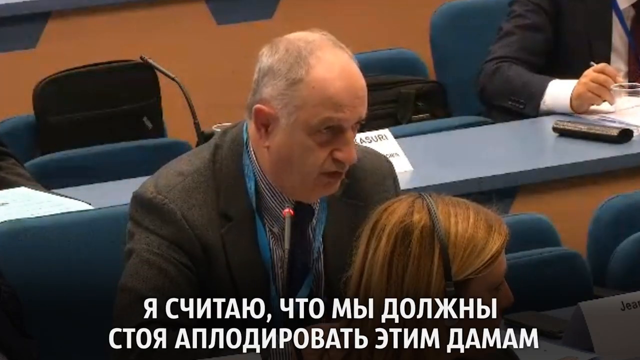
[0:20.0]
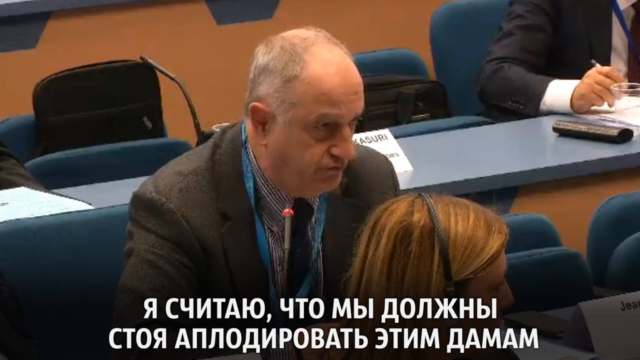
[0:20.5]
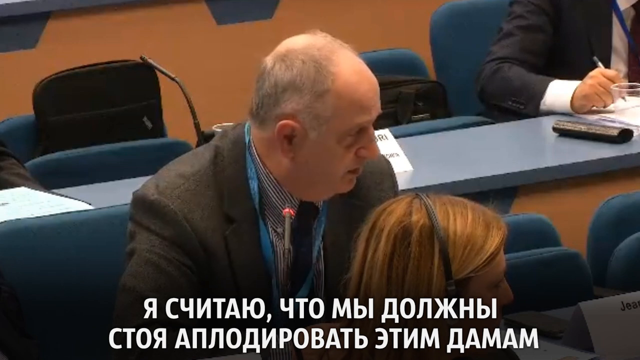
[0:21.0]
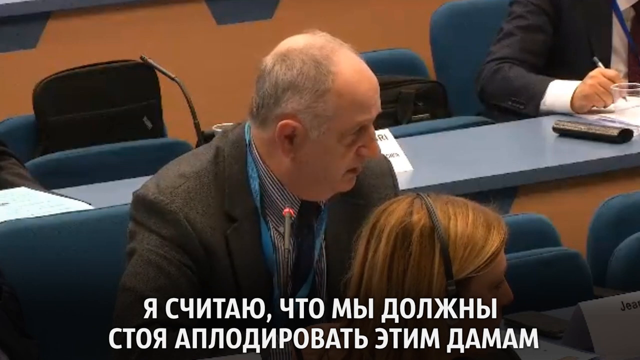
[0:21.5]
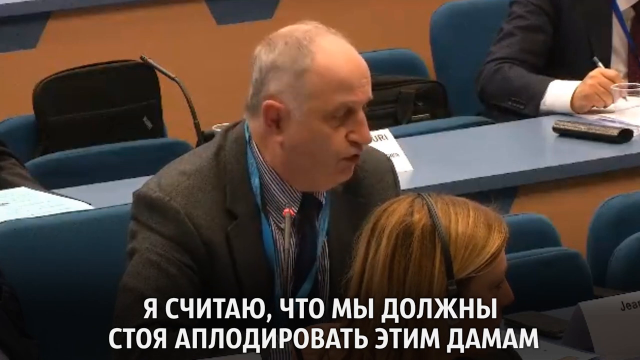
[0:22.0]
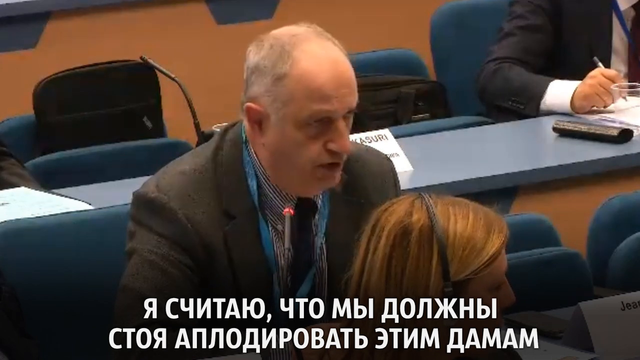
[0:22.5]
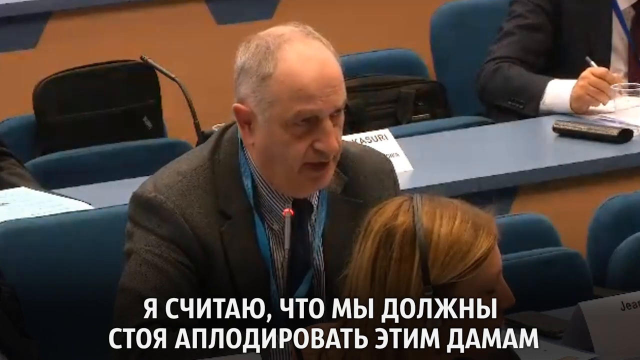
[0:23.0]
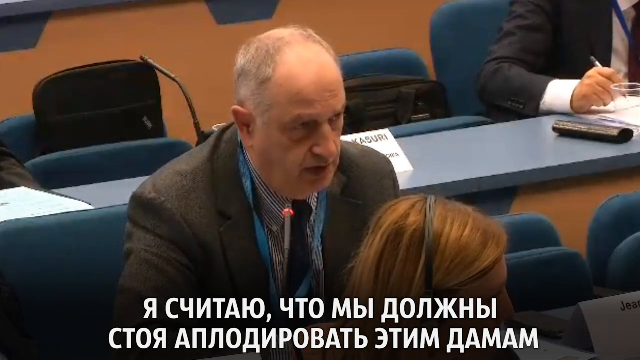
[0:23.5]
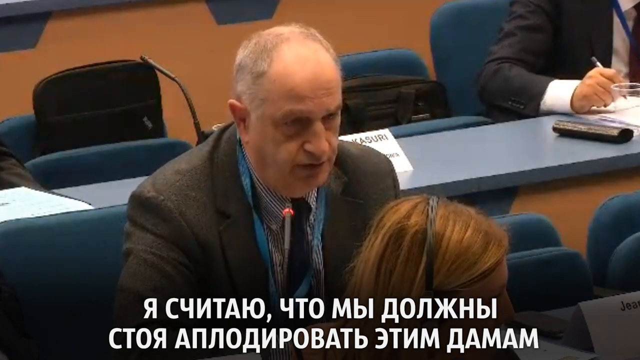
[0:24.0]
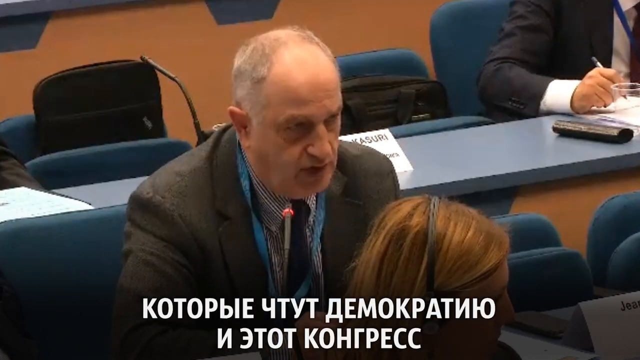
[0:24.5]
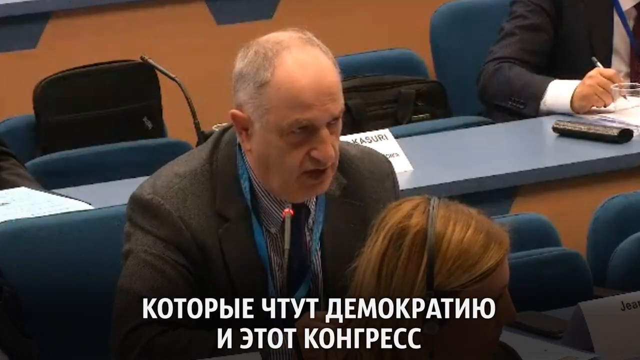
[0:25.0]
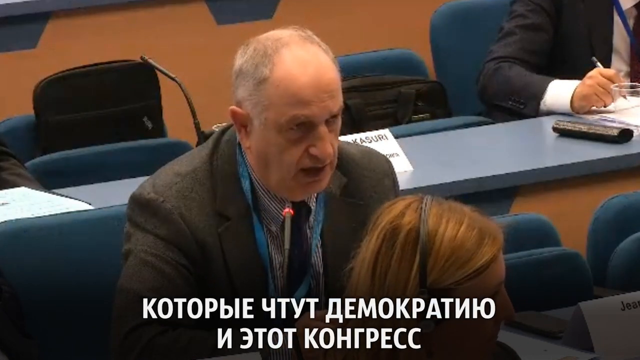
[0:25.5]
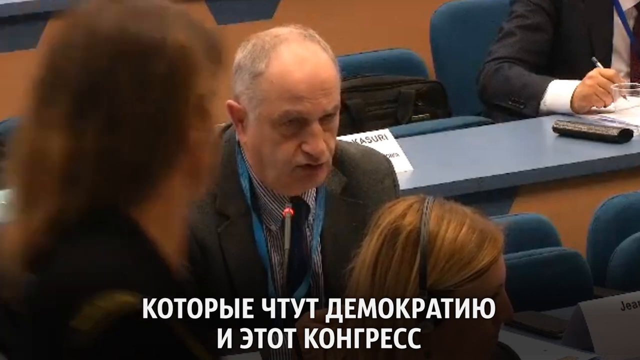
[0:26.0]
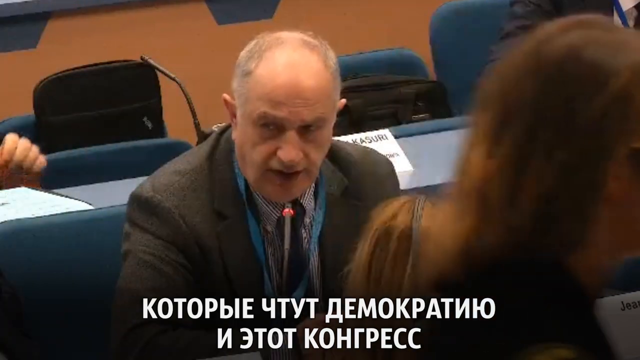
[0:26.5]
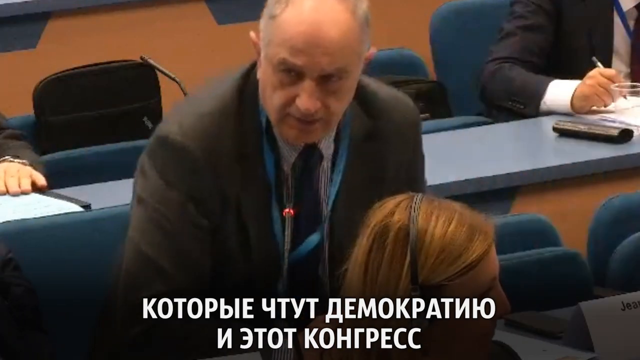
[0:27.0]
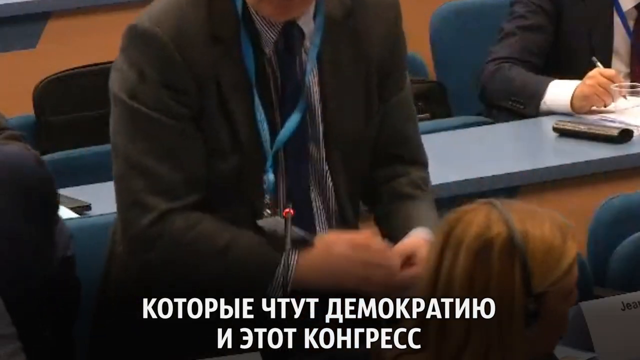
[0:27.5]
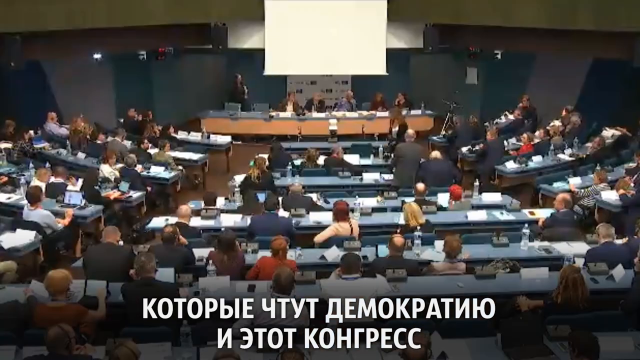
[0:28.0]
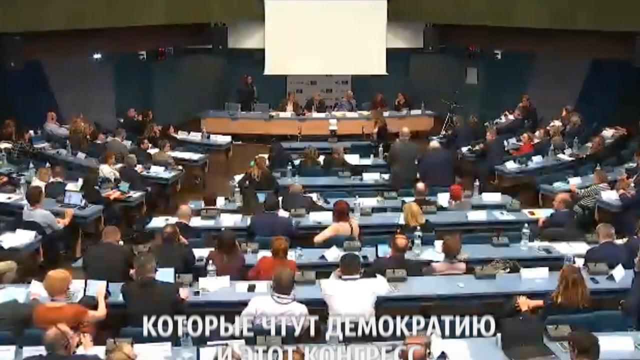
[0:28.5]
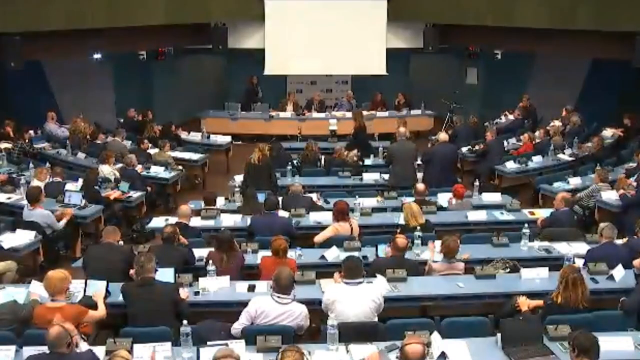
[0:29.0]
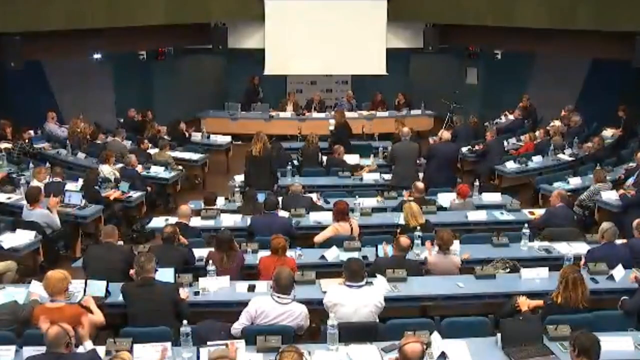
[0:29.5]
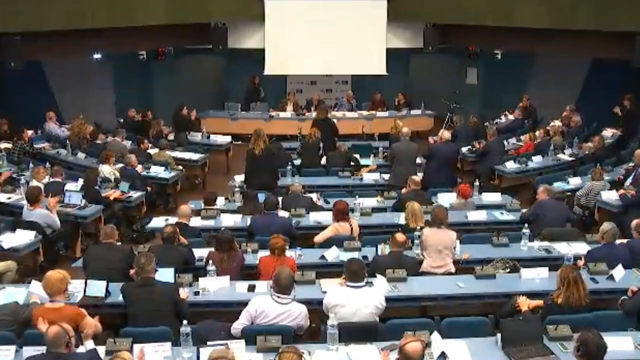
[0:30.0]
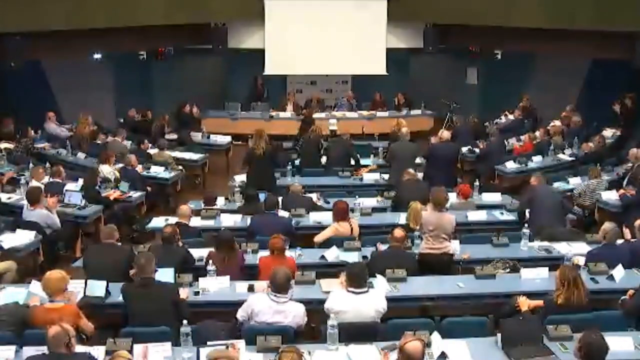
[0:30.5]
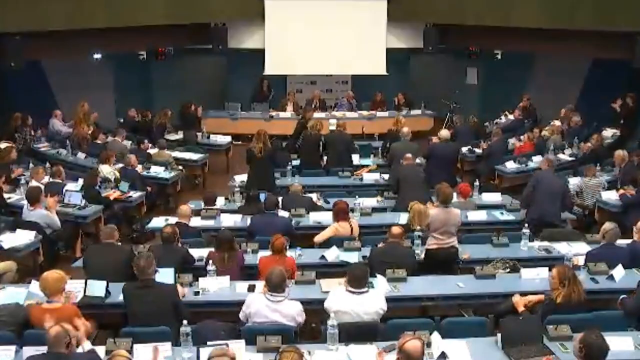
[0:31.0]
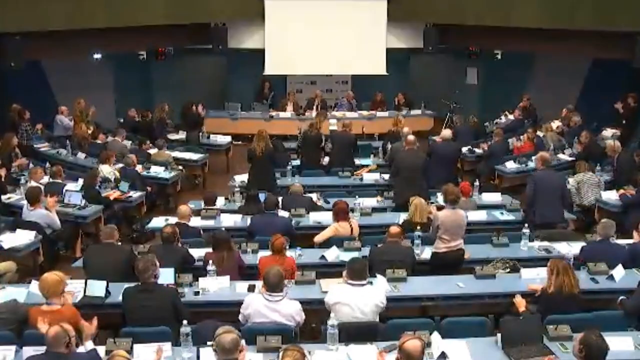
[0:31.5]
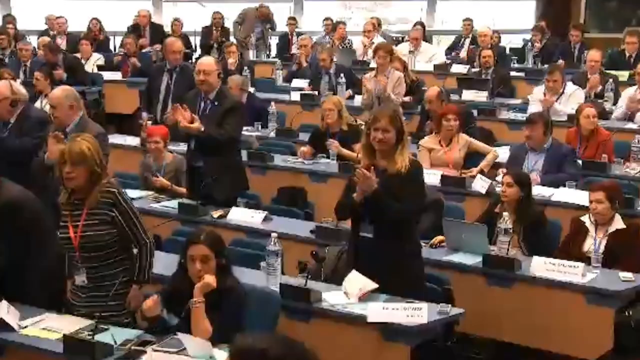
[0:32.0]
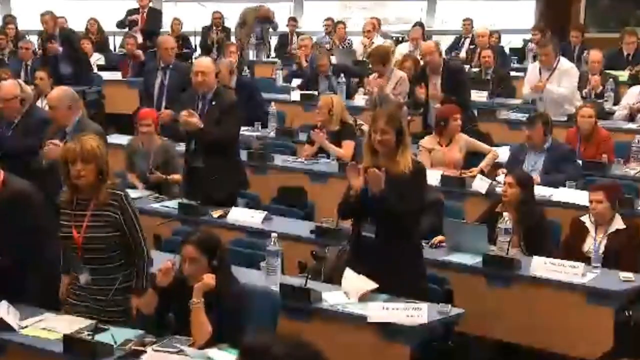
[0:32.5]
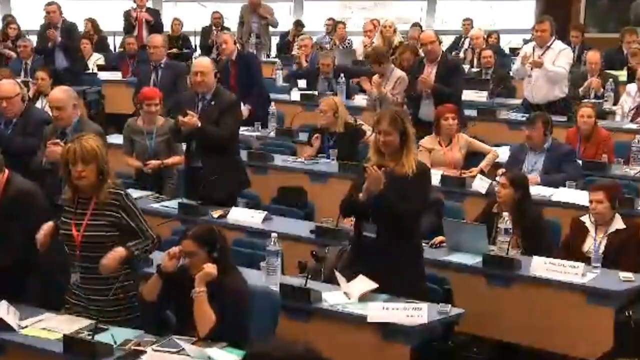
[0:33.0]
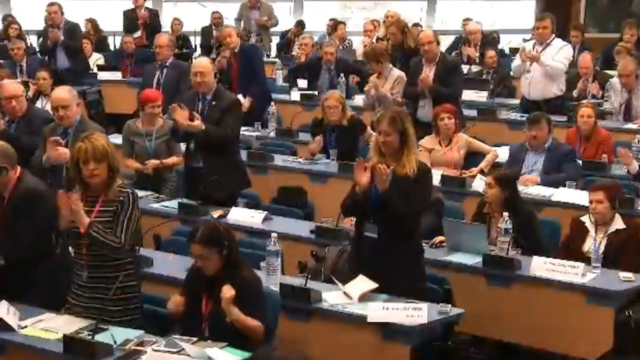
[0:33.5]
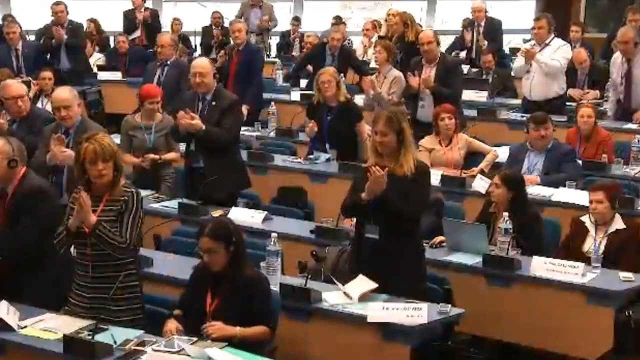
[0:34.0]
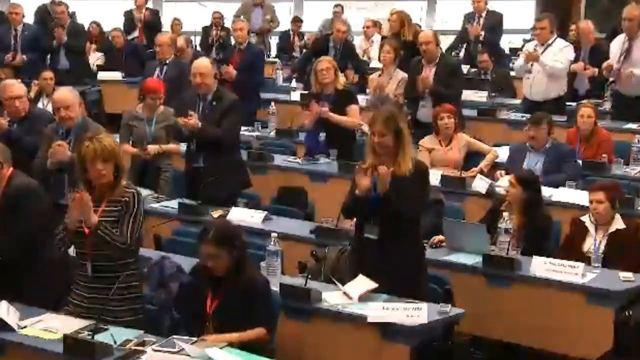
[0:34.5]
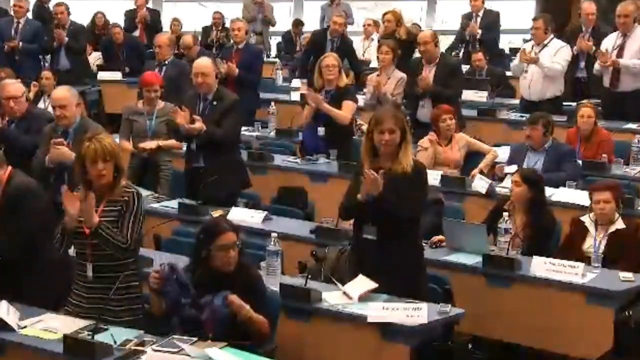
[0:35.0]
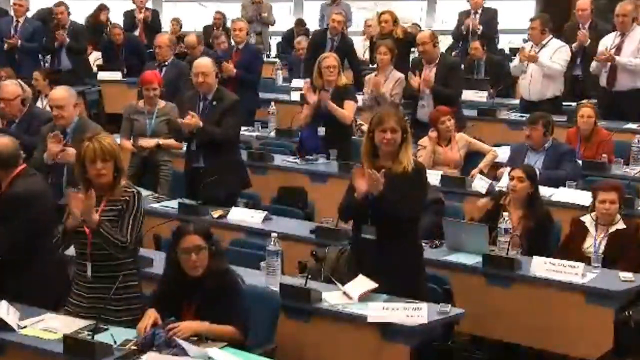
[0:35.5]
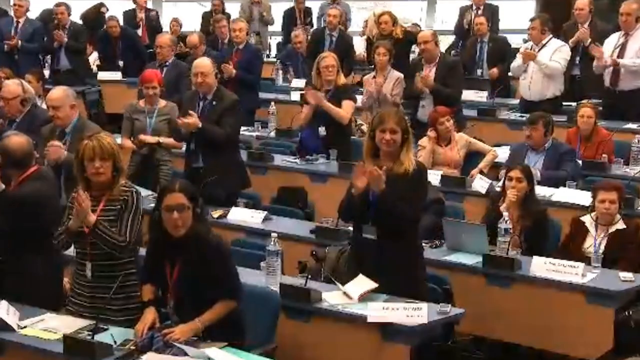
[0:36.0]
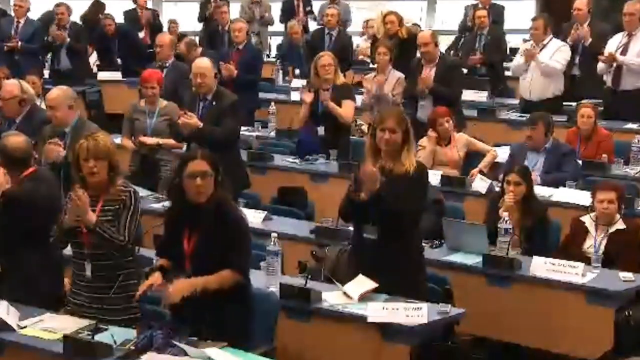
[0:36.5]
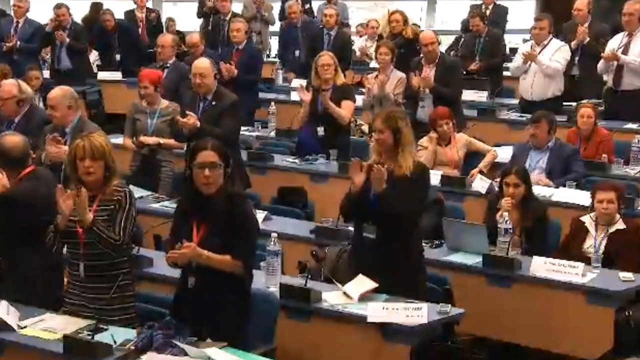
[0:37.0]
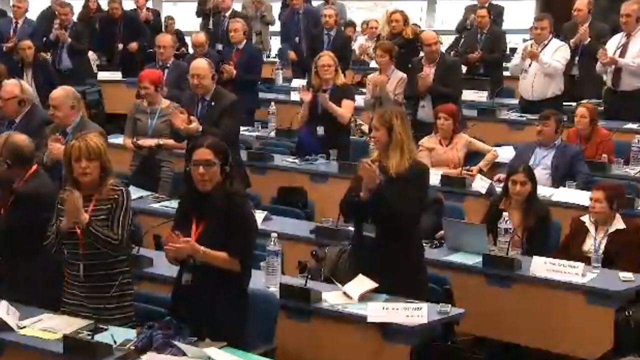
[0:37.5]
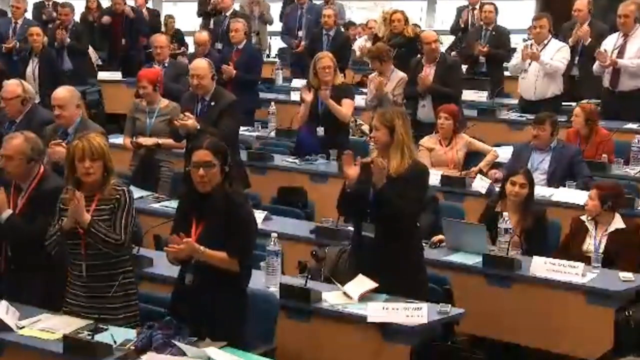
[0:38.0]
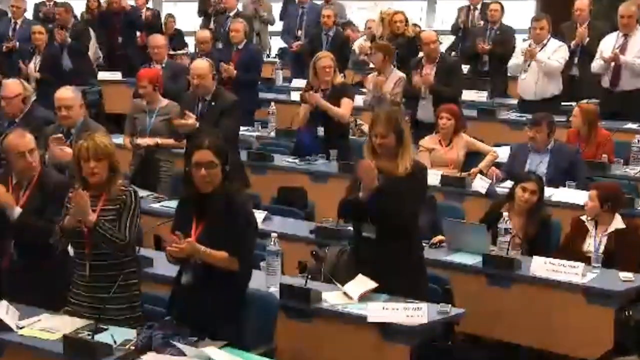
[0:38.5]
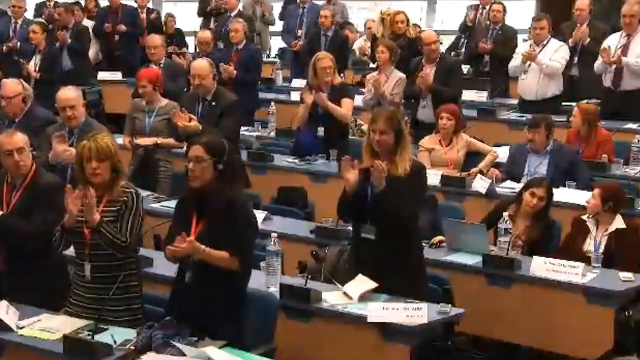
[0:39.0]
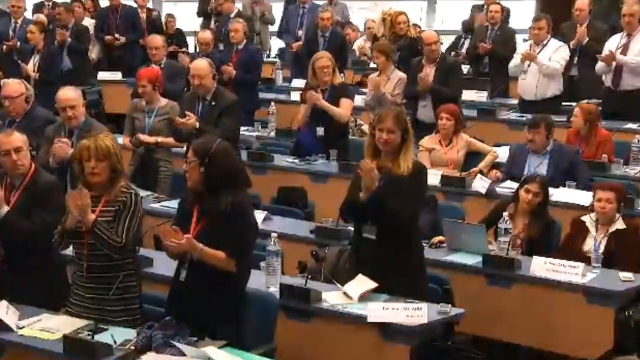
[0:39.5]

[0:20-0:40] The same older man is still talking, apparently still addressing the meeting. He then stands up and starts to clap, and many other people in the room stand up and clap as well. Some people do not stand up and clap, among them a lady with red hair and a man in a black vest and a blue shirt. There are some people in the bottom right who possibly look to be of Indian descent. Most of the room appears to be standing and clapping.